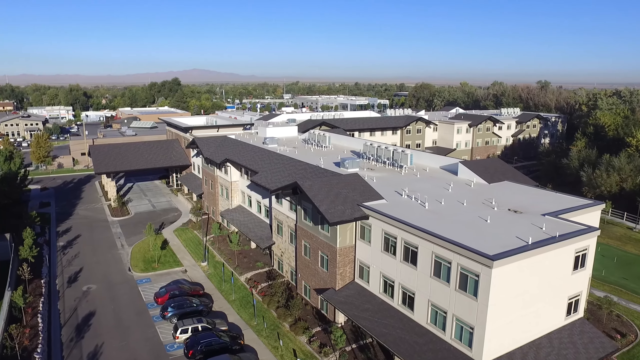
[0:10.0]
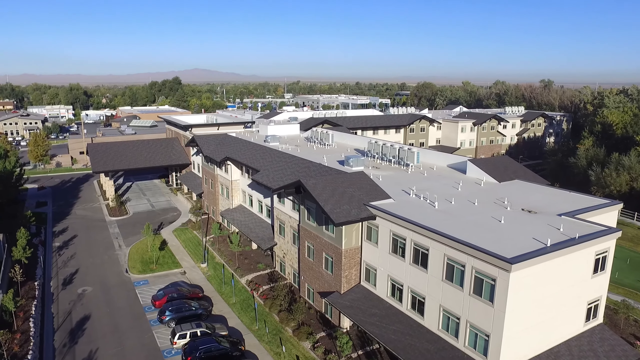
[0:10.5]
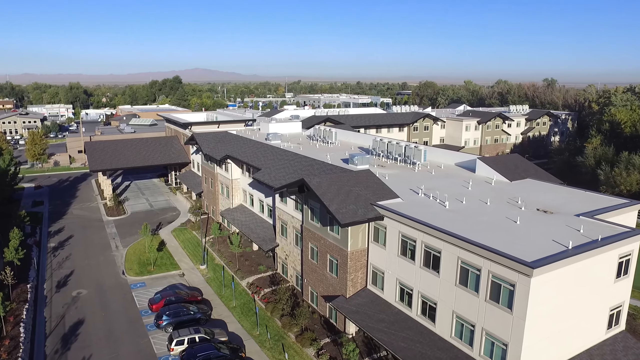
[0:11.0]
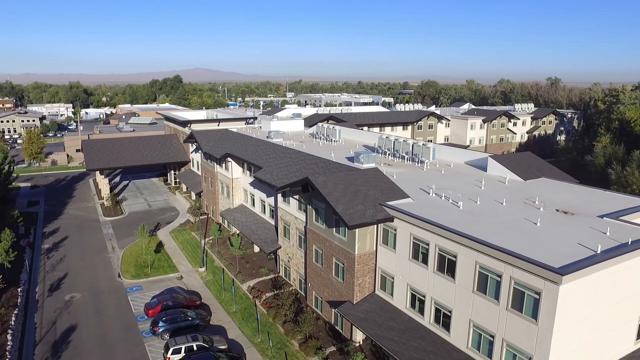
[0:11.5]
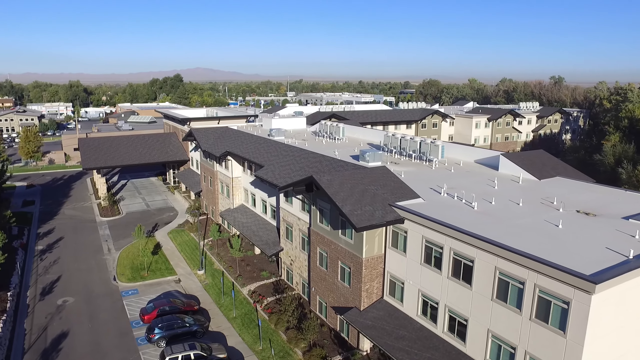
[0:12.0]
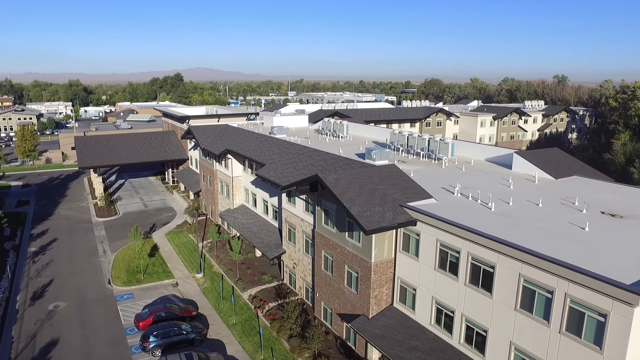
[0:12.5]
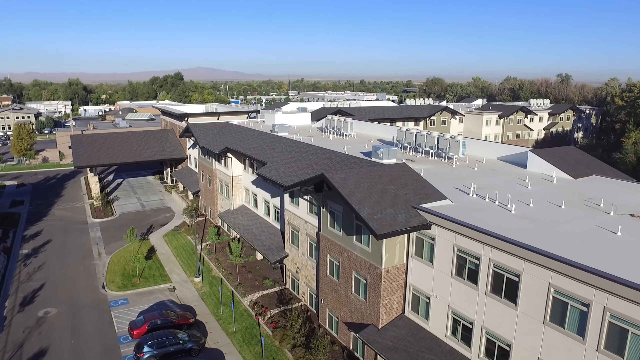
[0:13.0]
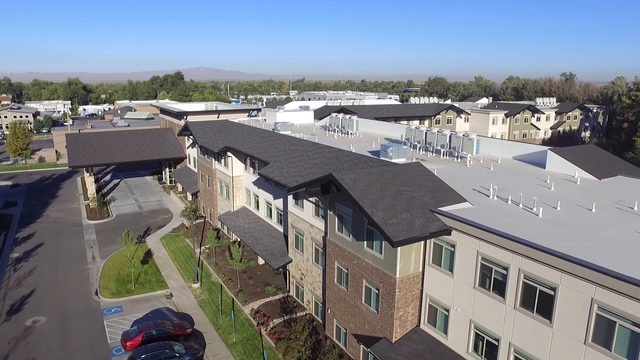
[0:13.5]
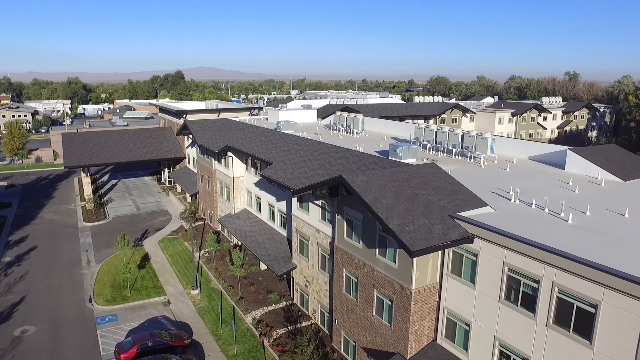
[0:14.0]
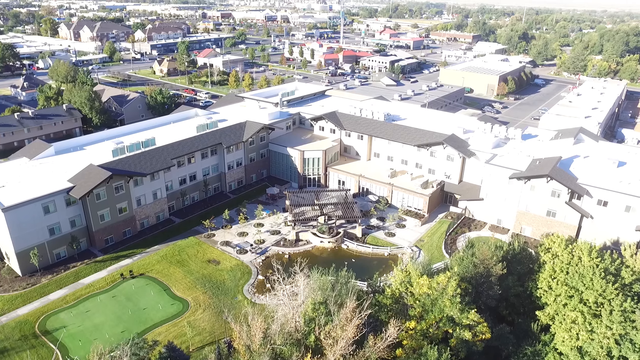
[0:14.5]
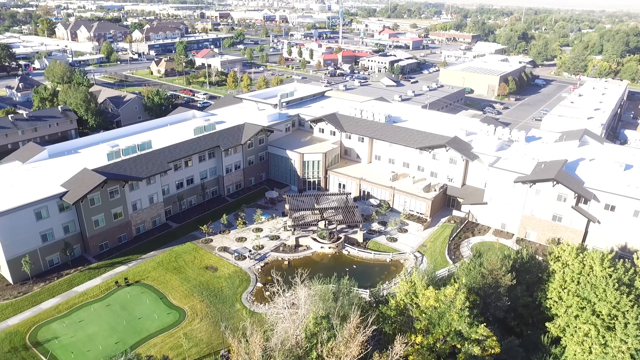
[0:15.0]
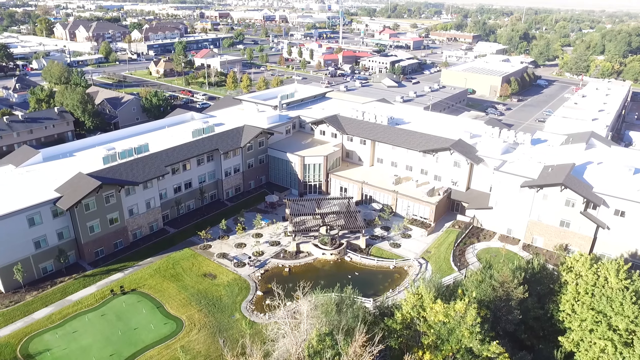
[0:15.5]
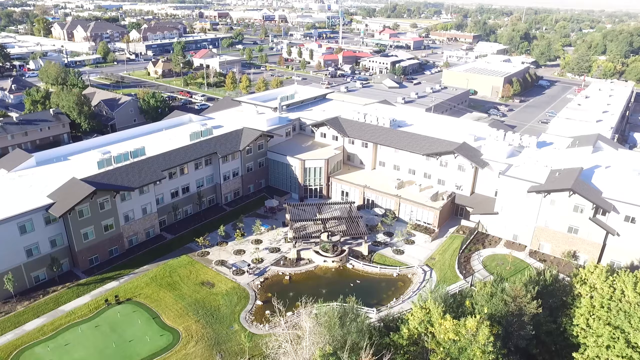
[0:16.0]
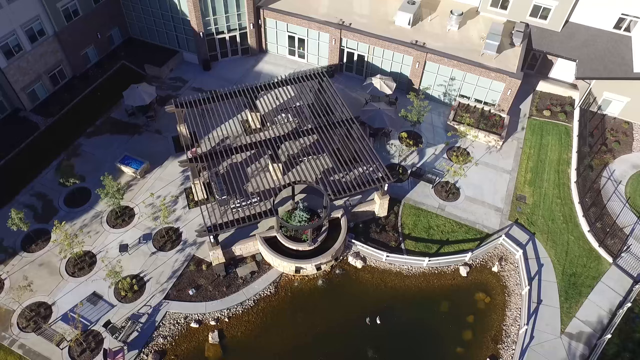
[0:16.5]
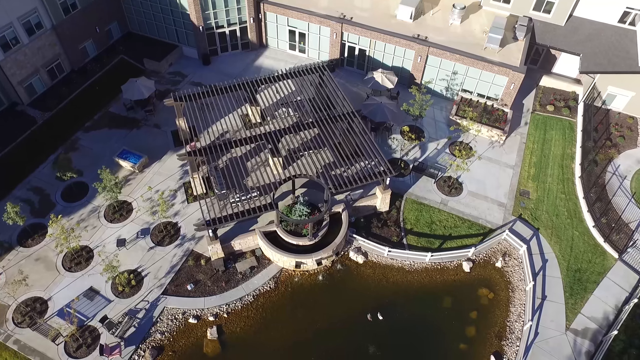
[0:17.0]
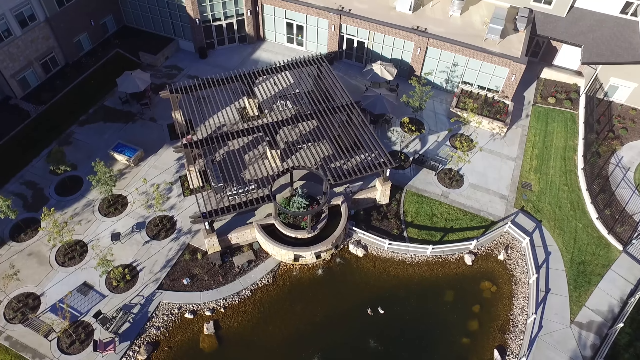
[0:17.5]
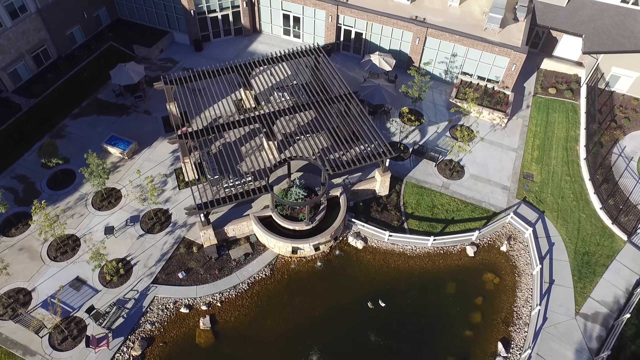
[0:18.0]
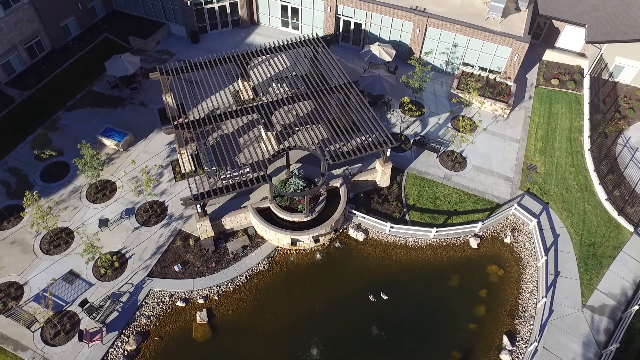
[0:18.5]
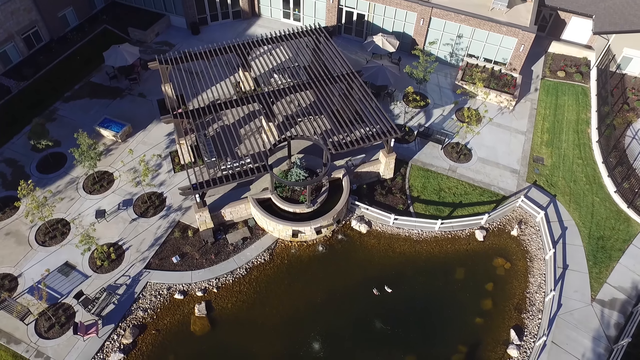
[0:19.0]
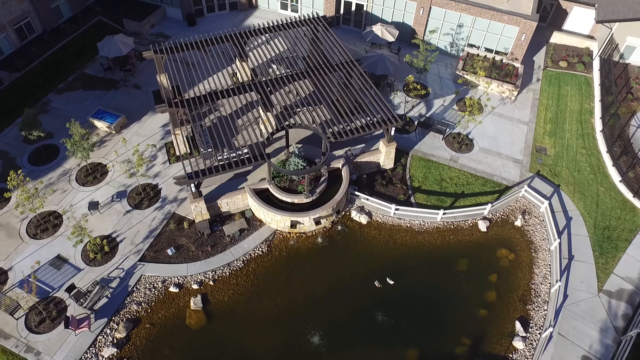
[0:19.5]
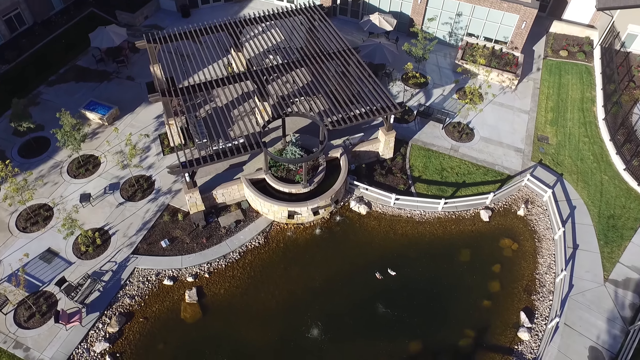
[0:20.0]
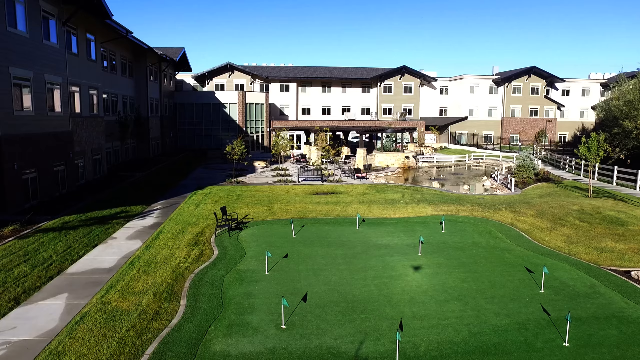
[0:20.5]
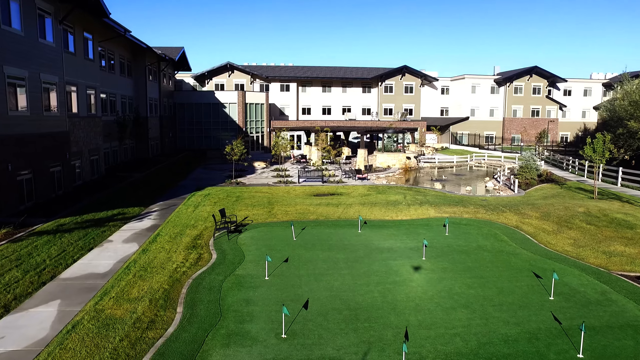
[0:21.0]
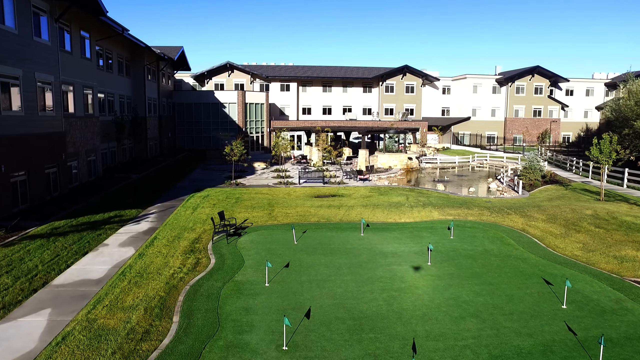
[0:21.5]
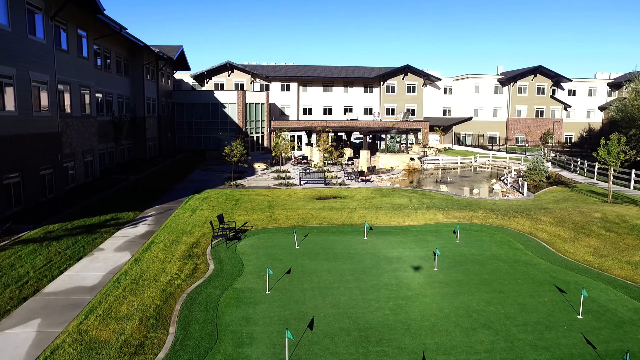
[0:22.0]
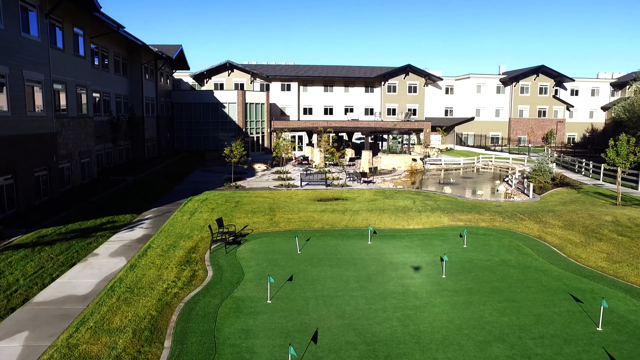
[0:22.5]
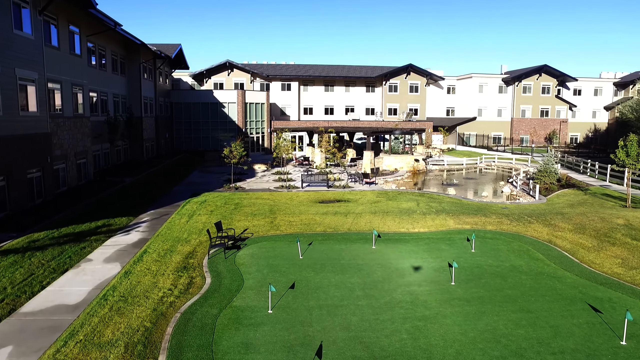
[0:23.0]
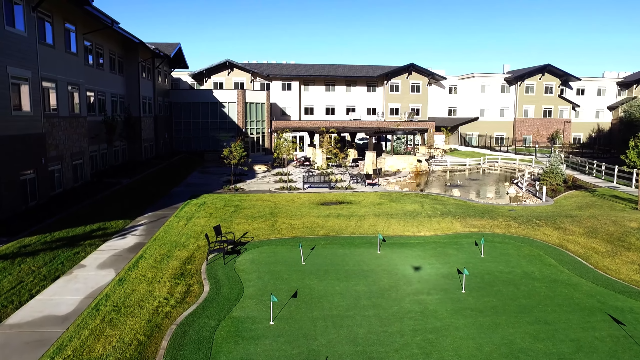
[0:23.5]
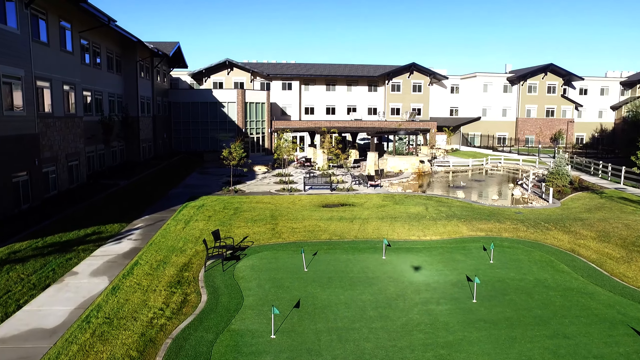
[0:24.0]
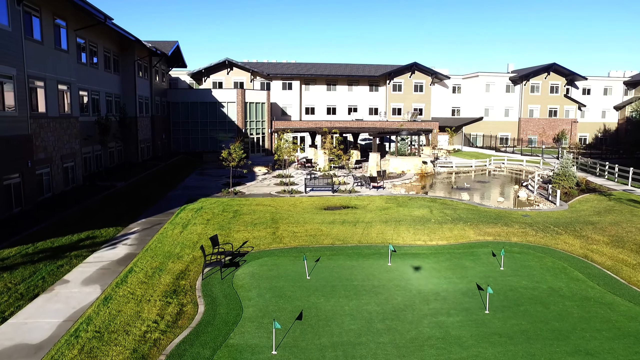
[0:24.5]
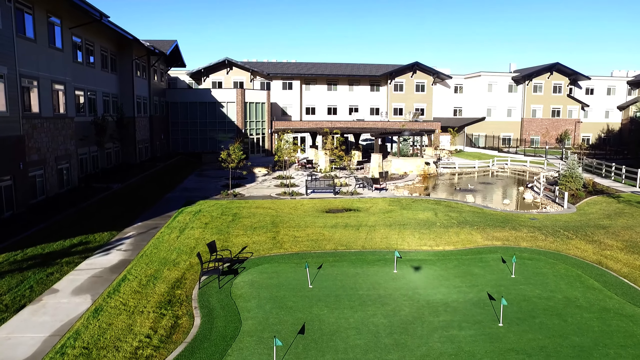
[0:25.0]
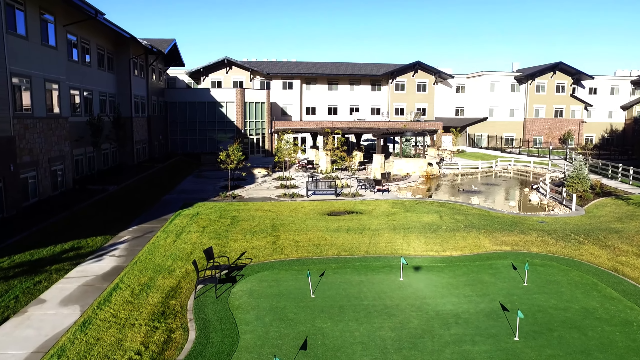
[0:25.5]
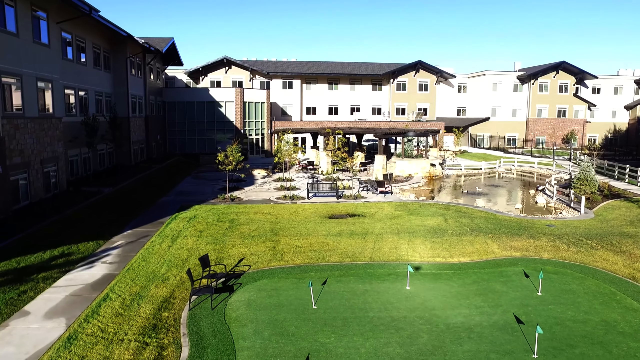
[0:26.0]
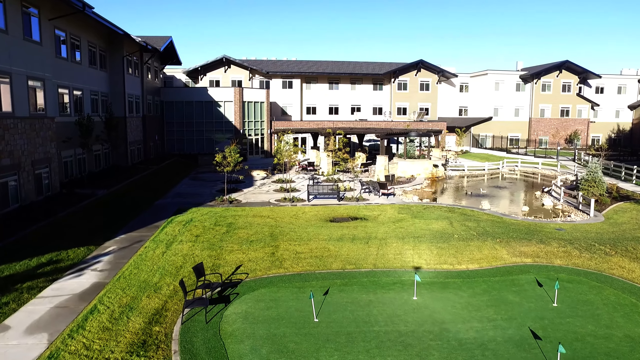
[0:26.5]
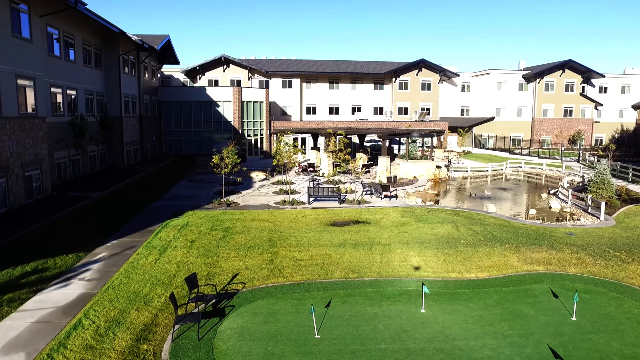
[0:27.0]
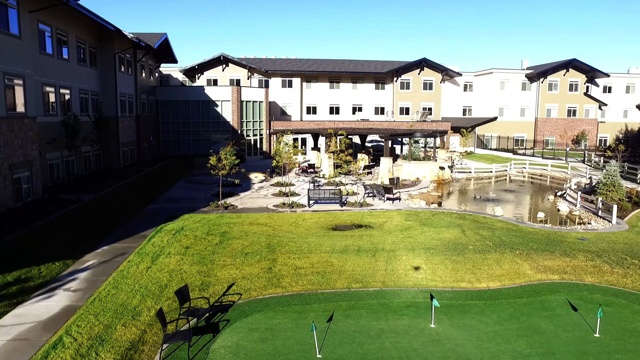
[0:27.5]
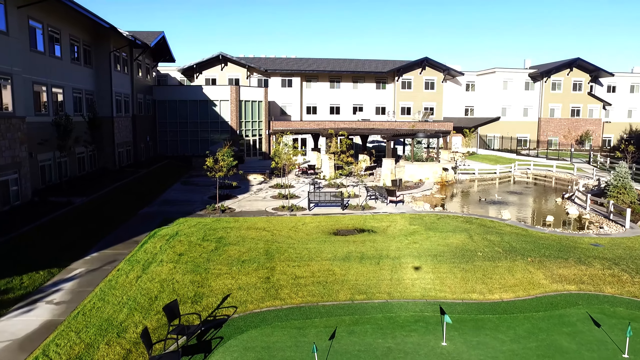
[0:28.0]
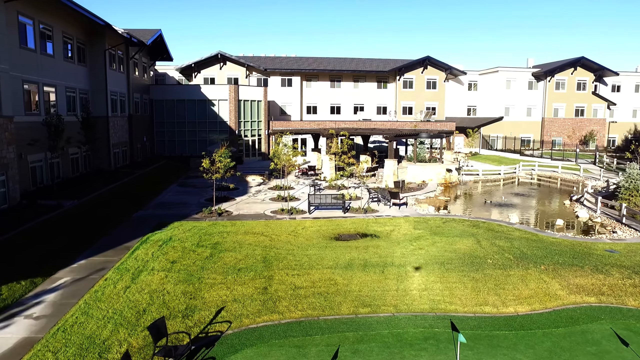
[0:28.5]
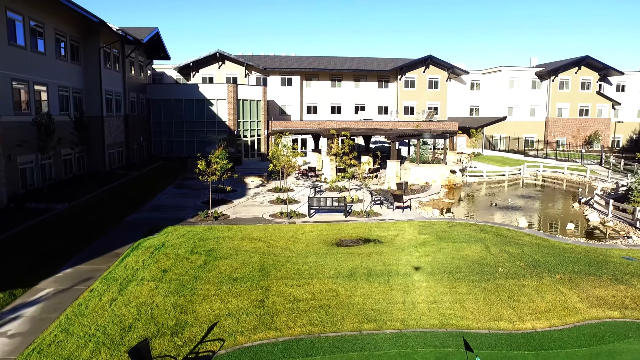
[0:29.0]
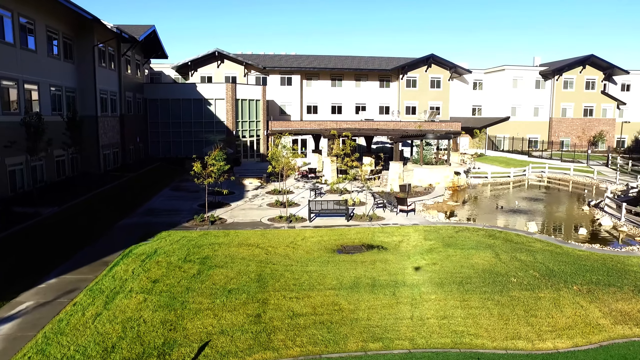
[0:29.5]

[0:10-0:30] A drone films a building complex from a kind of bird's-eye view, not too high up, looking down onto a building that is possibly a hotel or conference facility. It has a forecourt that people can pull their cars into, not a parking area. The footage then shows the back of the property, where there is a small kind of water feature like a lake with a bridge going over it, and a small golf course. The sky is very blue, and it seems to be quite a hot country, but there is some greenery: green lawns and trees round about, so it does not look completely barren. The building itself is quite plain looking and looks like it could be a nursing home, with very plain white buildings and a lot of flat roofs. The landscape is very flat; in the distance lots of trees surround the building, with almost desert-like land in between.